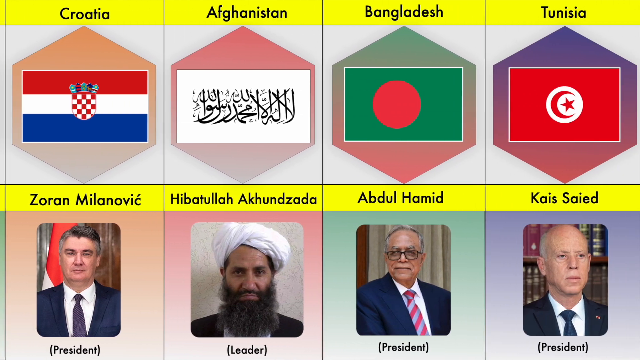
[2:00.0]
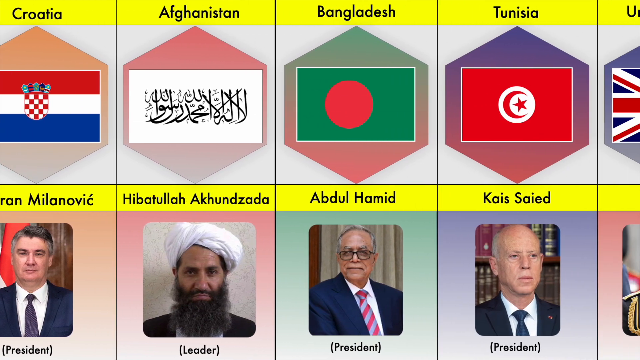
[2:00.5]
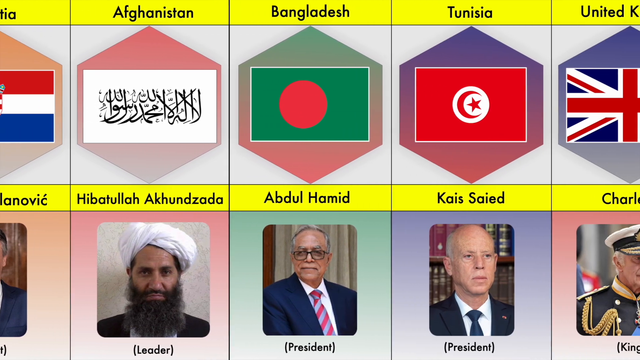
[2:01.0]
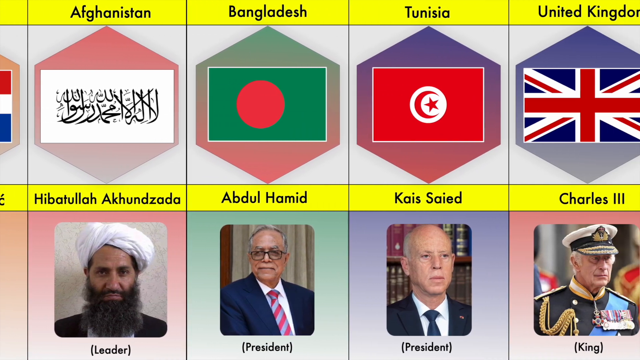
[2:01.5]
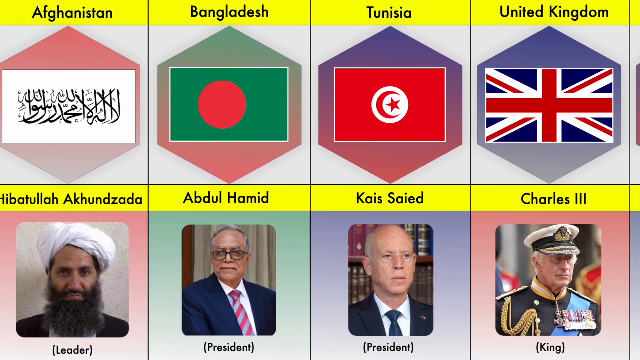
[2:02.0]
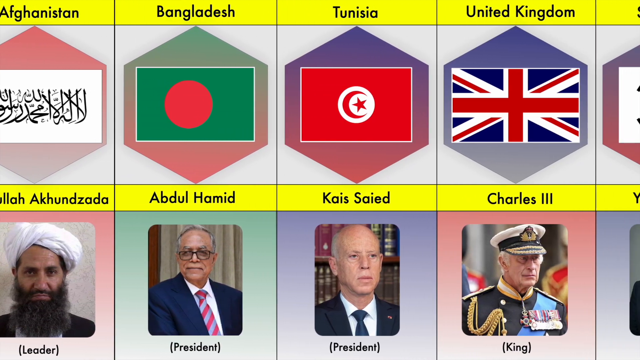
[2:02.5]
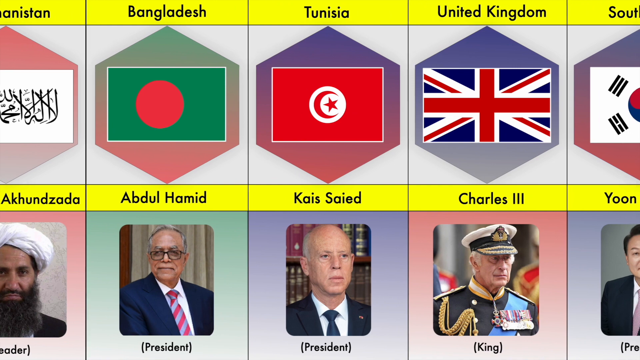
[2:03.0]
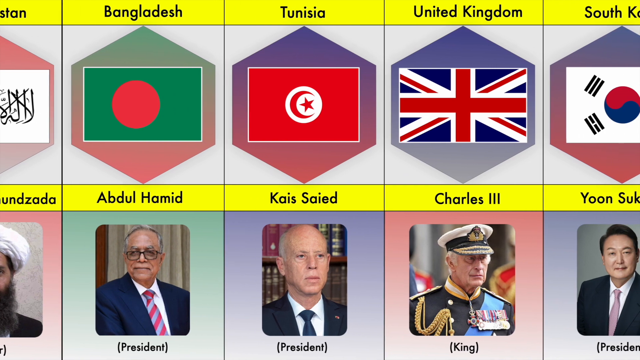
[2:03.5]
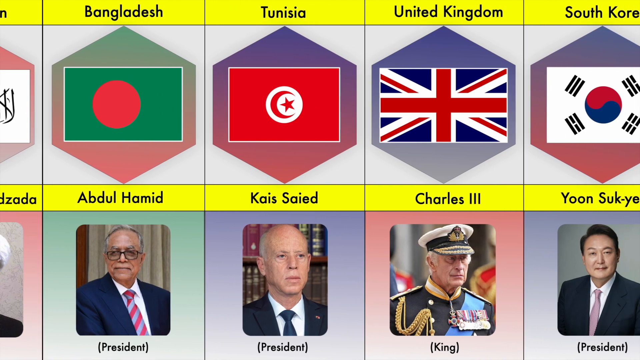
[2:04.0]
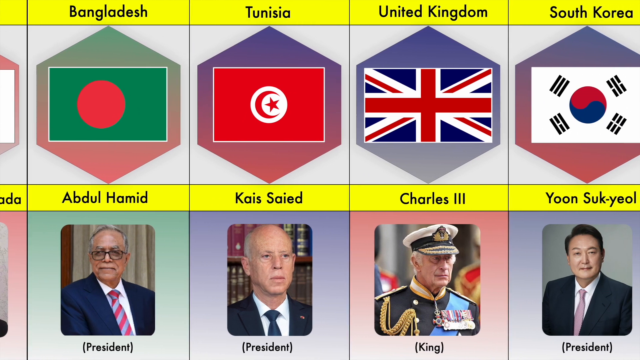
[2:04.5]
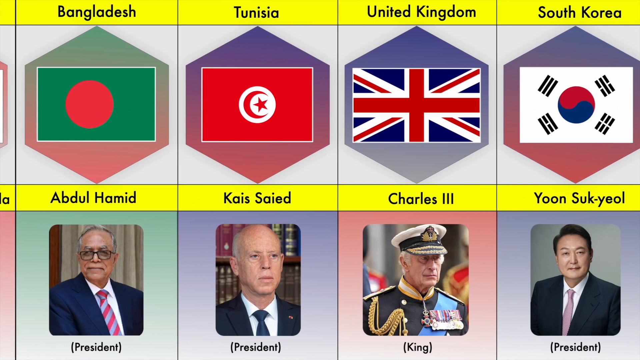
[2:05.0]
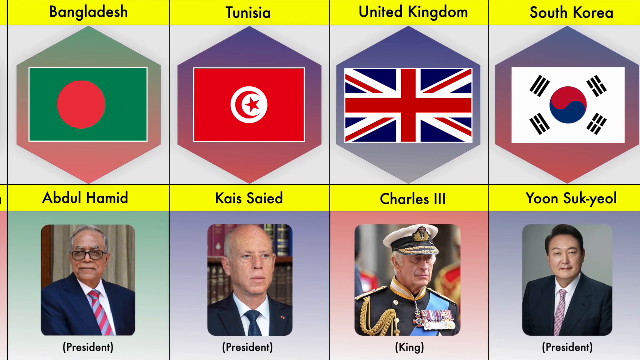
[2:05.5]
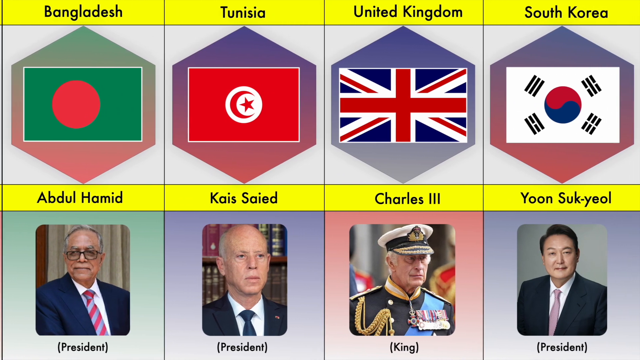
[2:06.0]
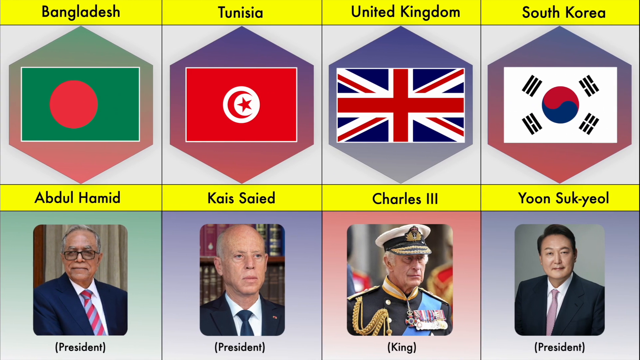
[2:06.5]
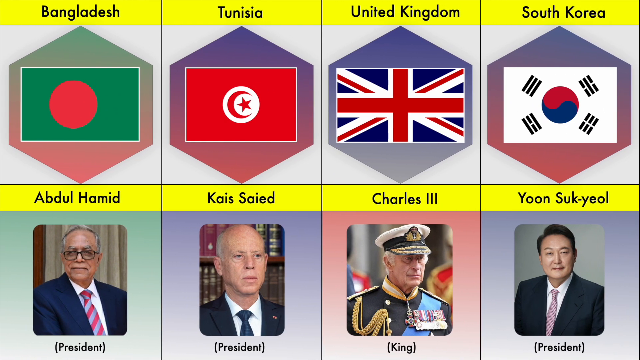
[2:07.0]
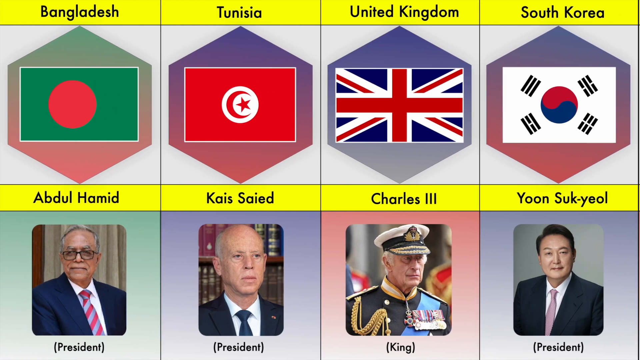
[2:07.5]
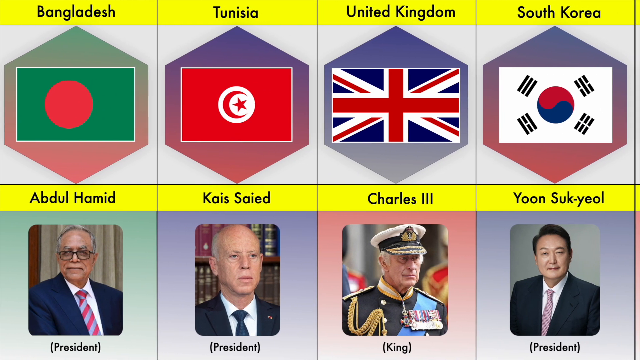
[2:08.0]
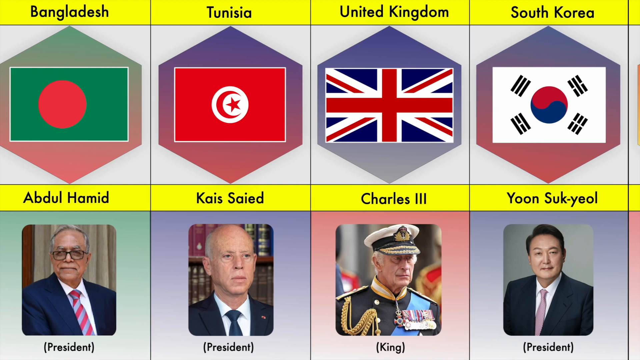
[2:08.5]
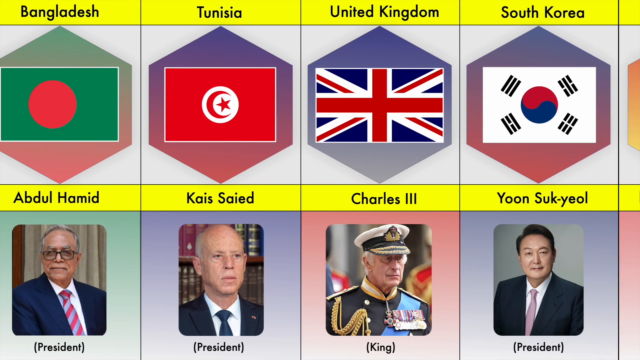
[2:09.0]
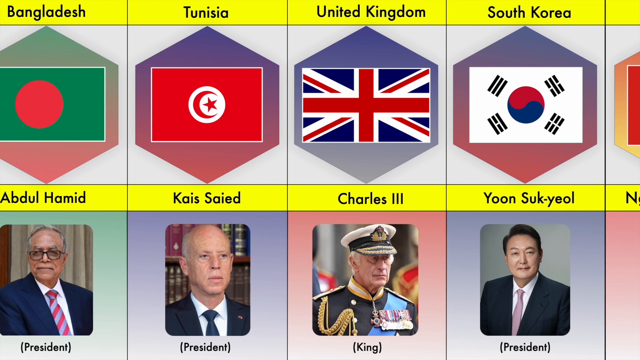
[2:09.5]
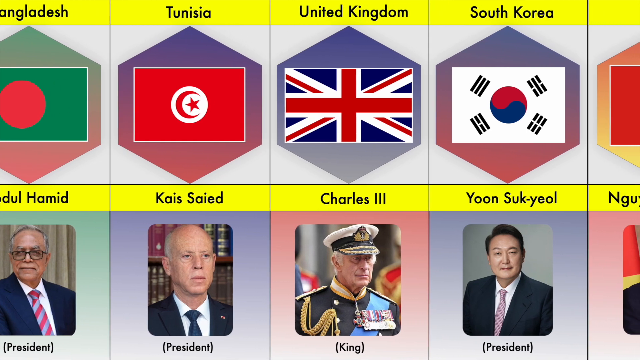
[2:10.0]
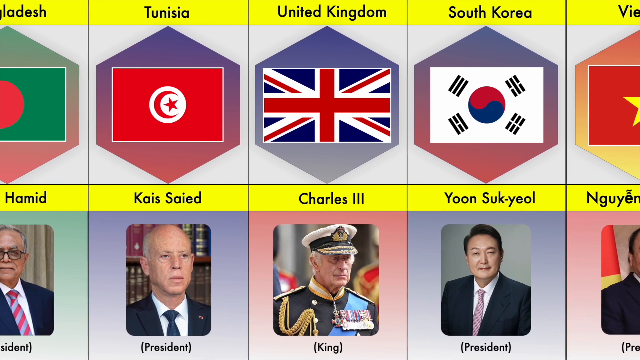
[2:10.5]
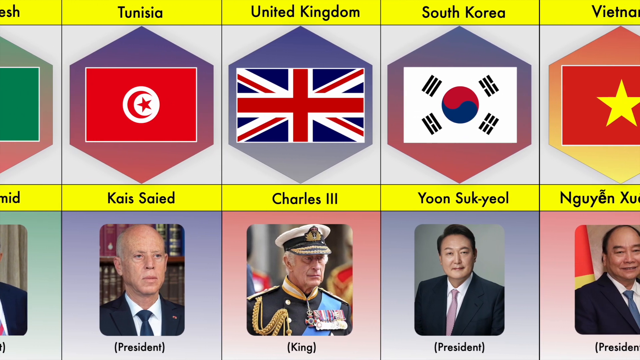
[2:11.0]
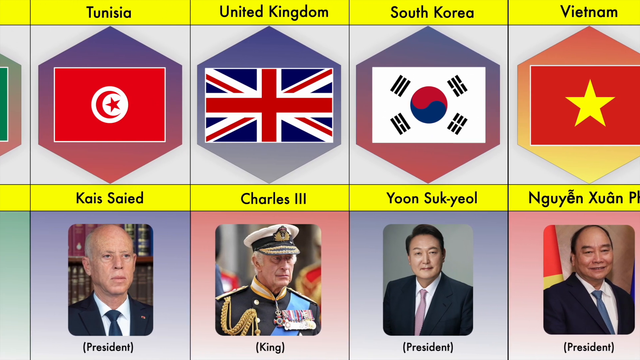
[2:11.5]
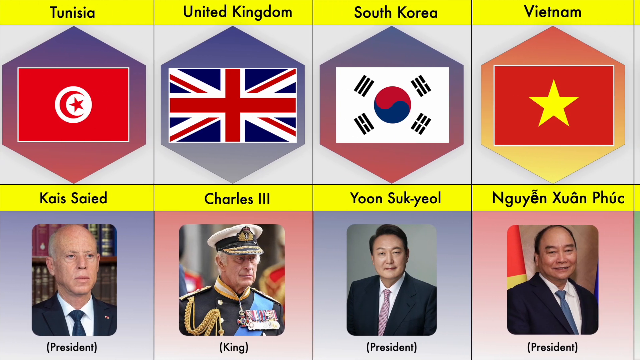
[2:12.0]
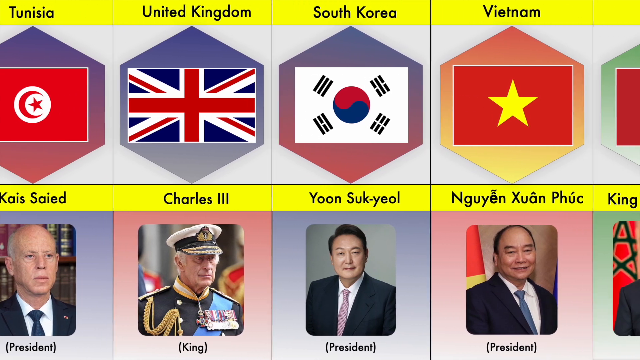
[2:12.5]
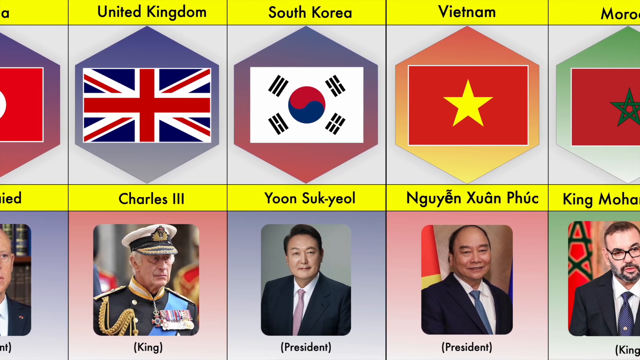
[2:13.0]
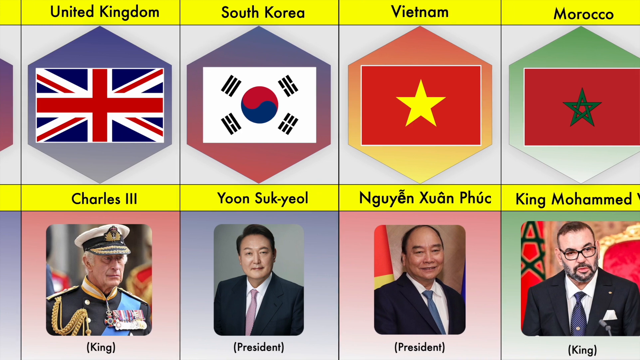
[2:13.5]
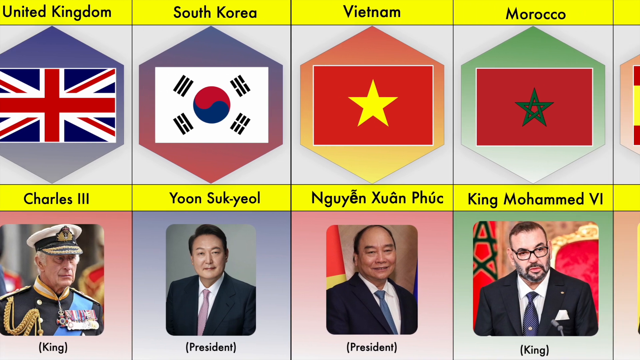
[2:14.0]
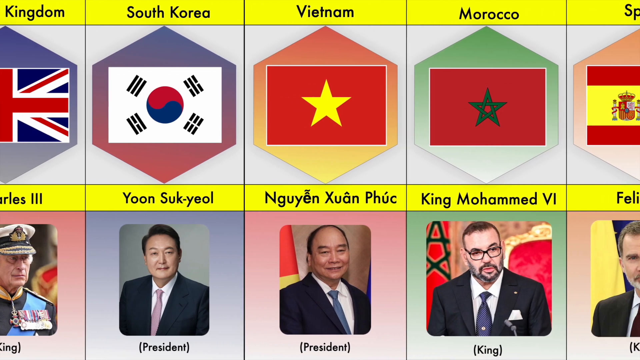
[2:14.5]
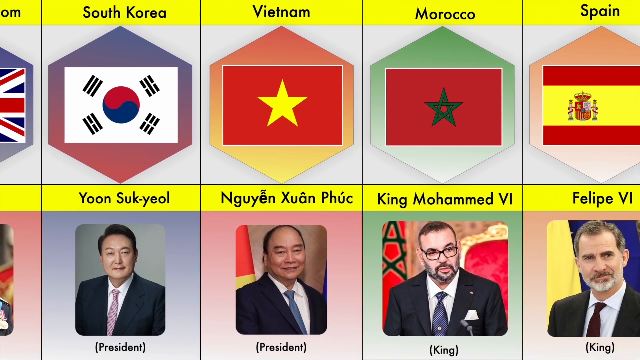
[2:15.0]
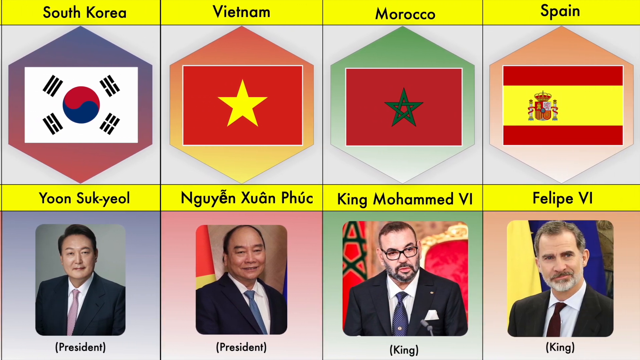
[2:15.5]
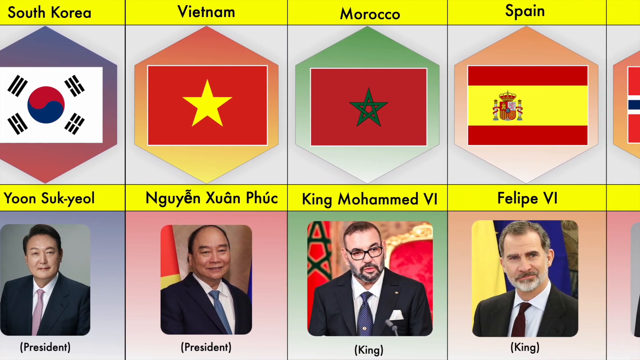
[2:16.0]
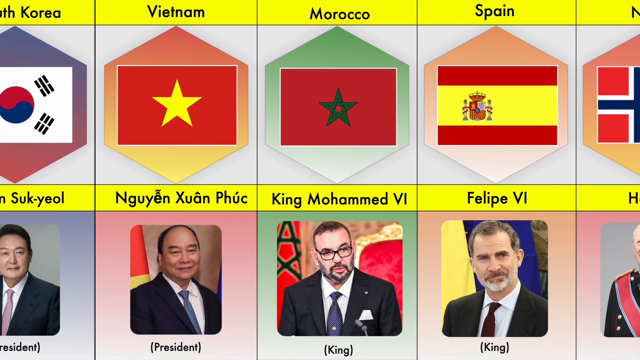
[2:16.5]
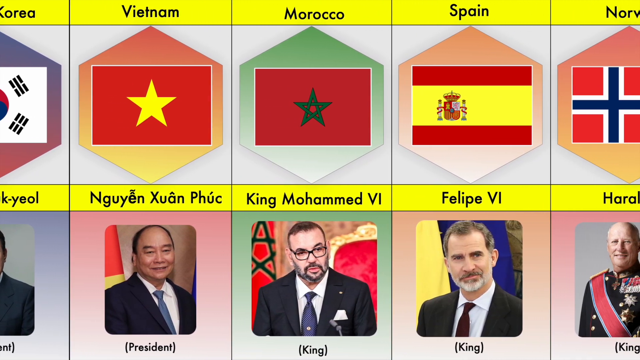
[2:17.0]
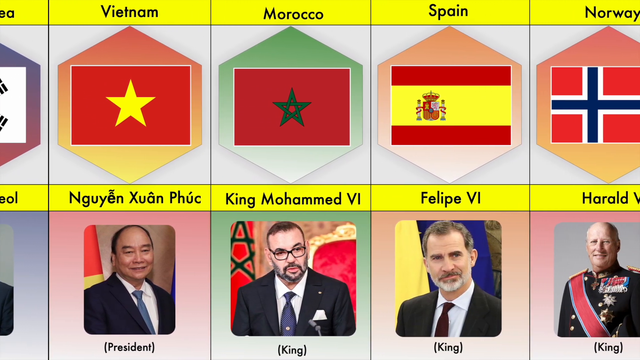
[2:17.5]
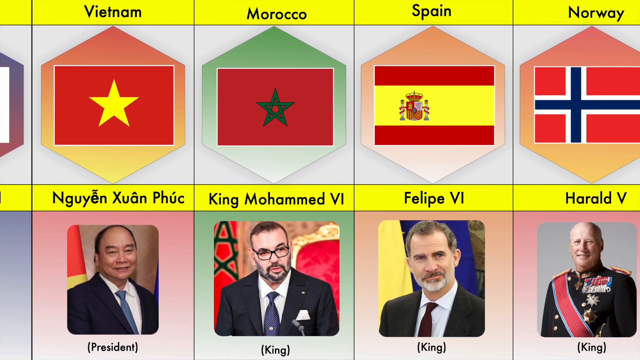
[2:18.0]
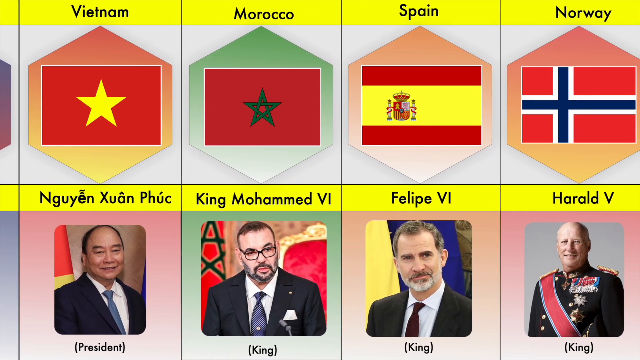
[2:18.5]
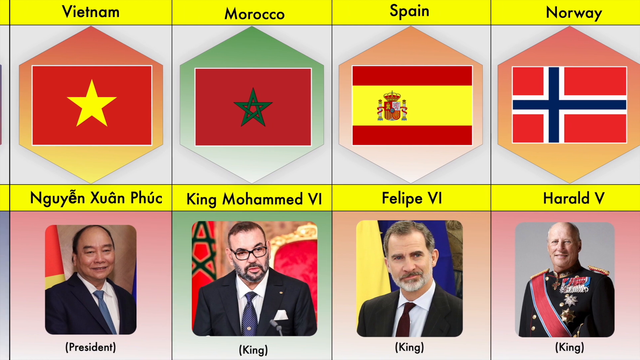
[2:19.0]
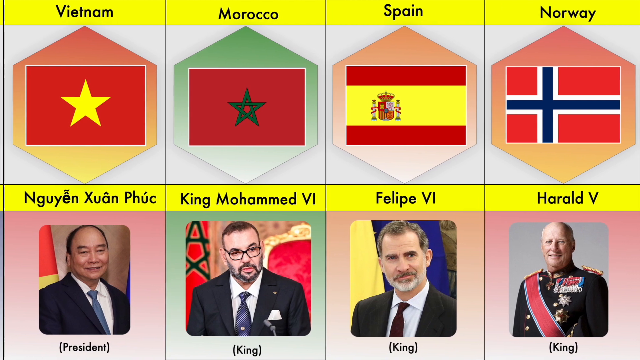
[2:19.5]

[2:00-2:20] Leaders of many different countries are shown in the bottom strip of the screen, each with the flag of the country they represent directly above them. People on the left side of the screen exit the shot while new people enter from the right side, presenting an array of different leaders and countries.